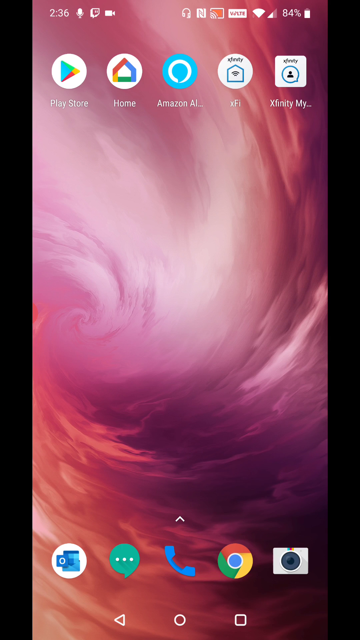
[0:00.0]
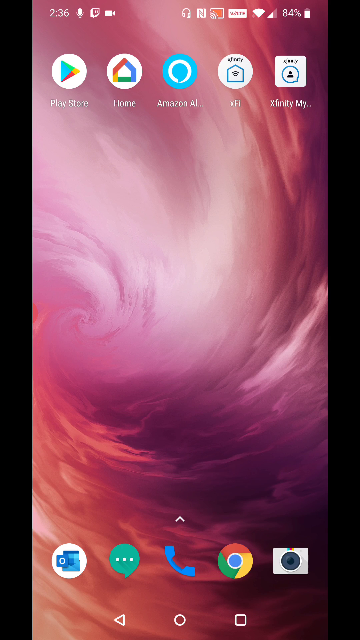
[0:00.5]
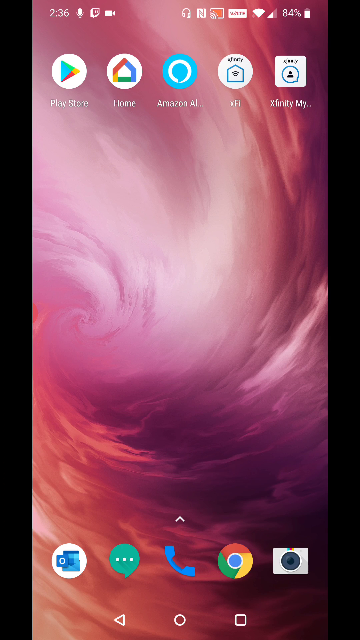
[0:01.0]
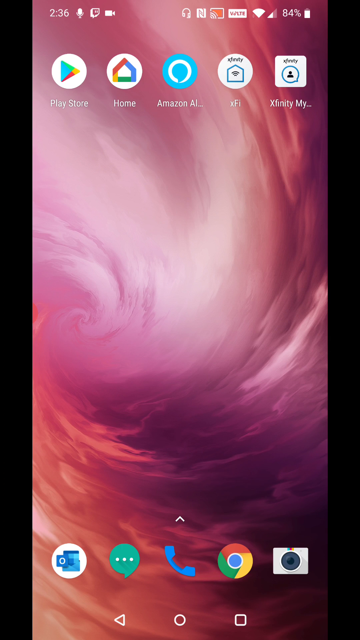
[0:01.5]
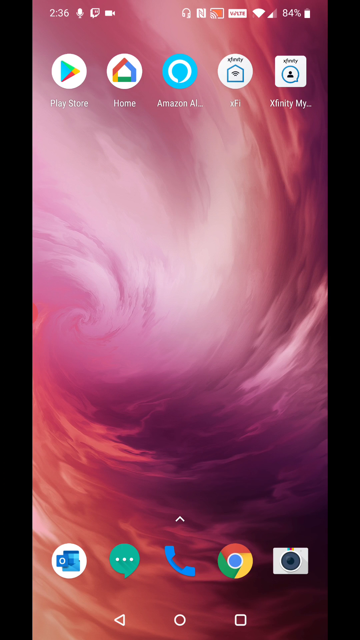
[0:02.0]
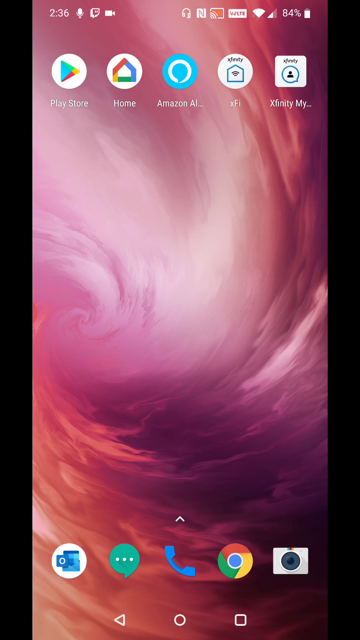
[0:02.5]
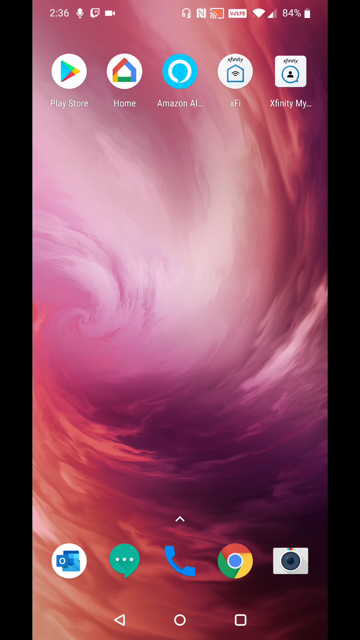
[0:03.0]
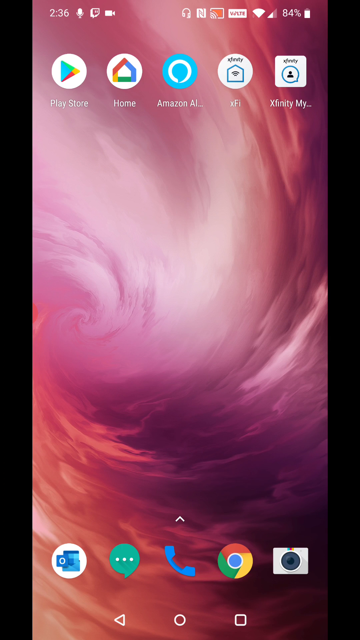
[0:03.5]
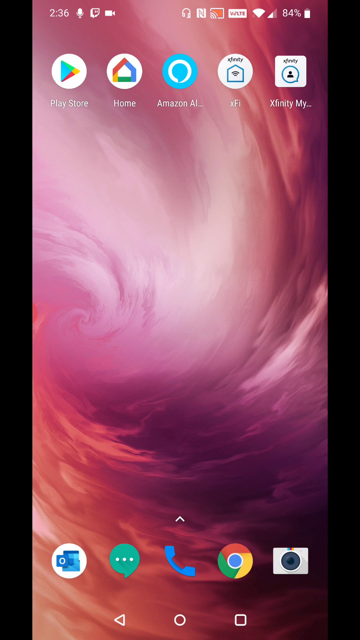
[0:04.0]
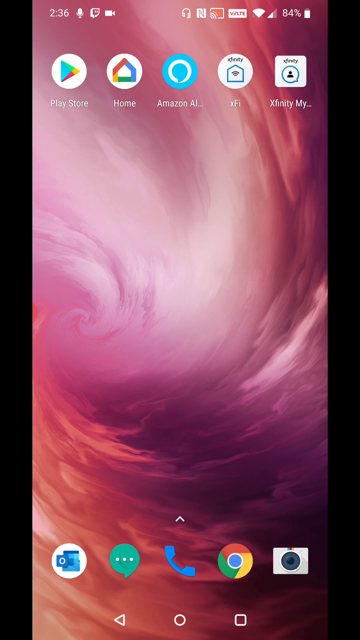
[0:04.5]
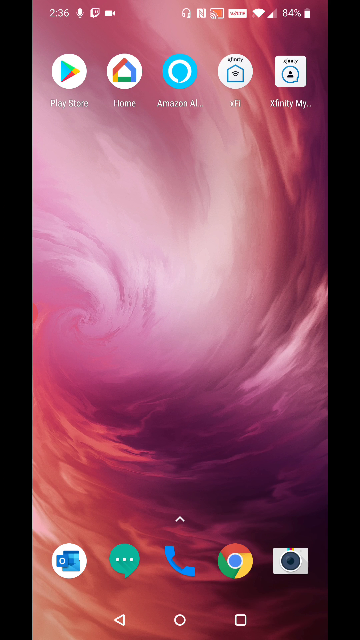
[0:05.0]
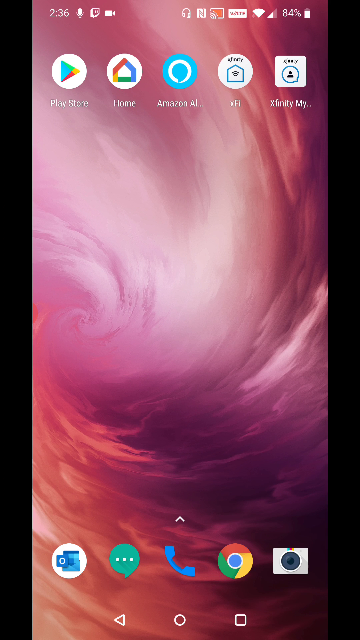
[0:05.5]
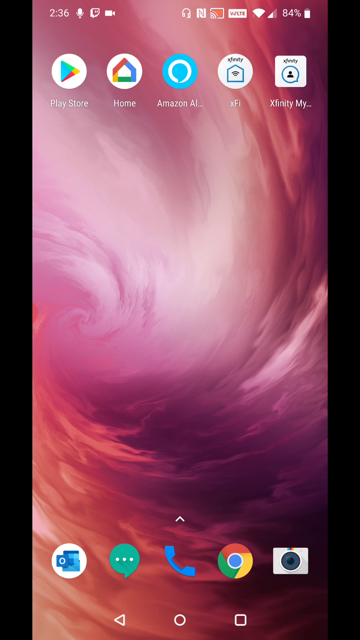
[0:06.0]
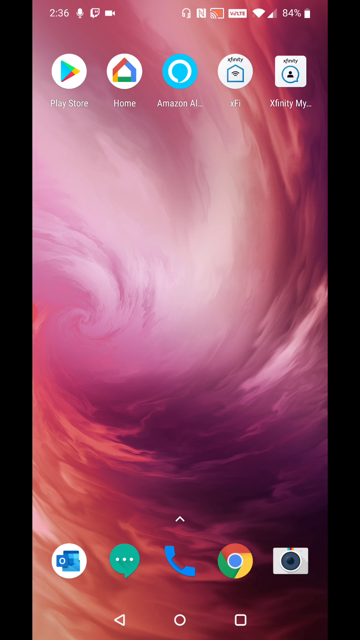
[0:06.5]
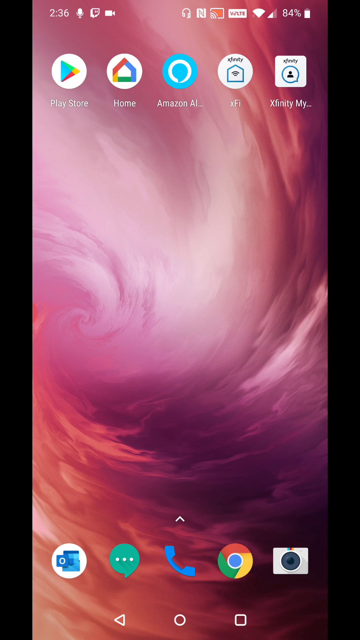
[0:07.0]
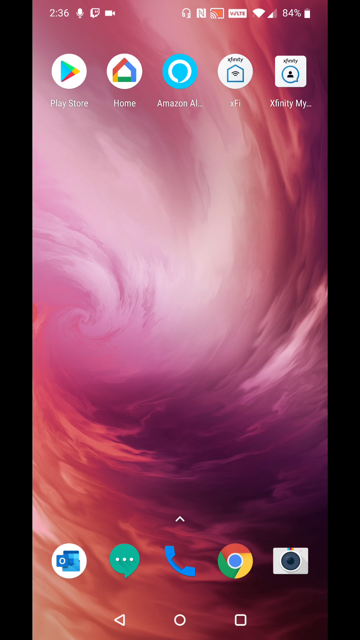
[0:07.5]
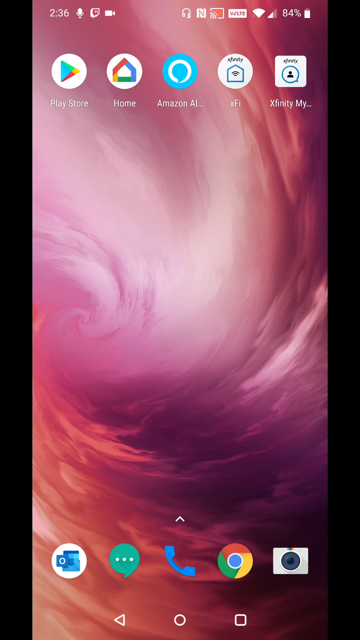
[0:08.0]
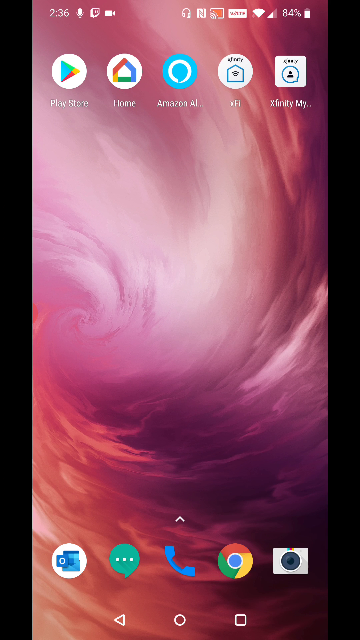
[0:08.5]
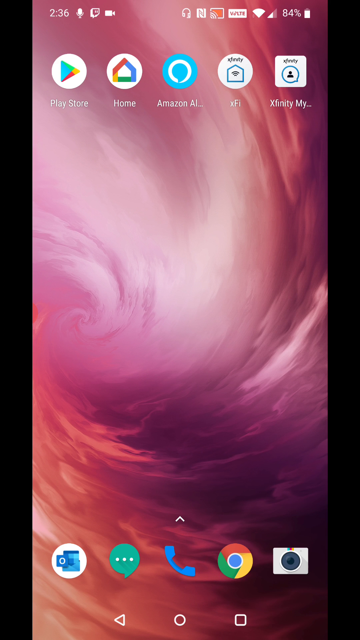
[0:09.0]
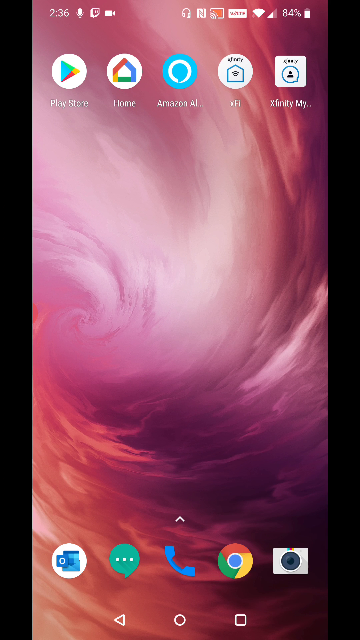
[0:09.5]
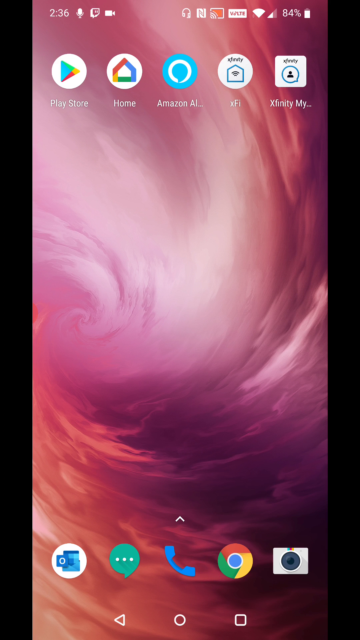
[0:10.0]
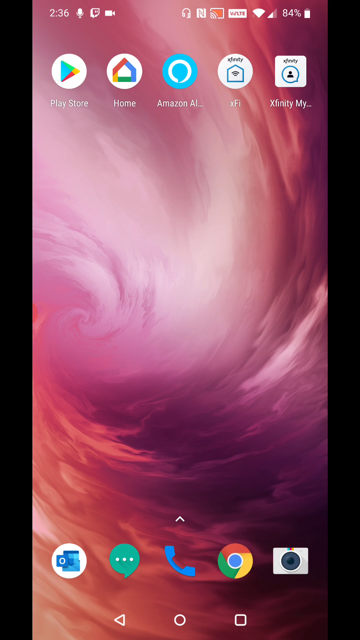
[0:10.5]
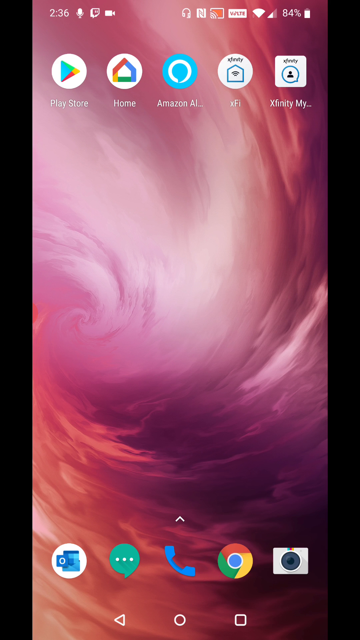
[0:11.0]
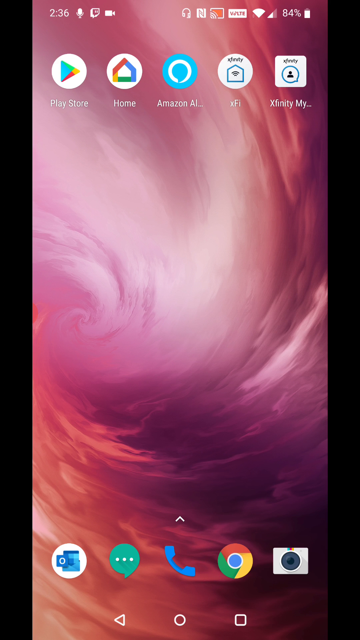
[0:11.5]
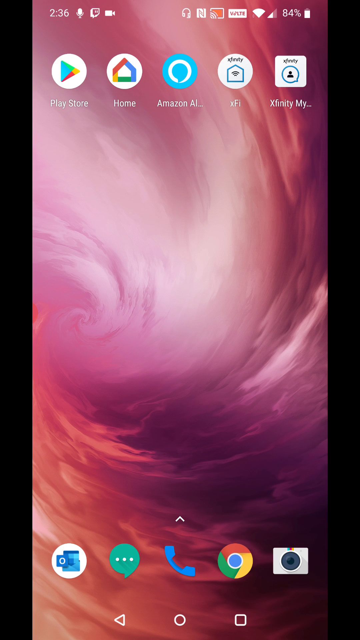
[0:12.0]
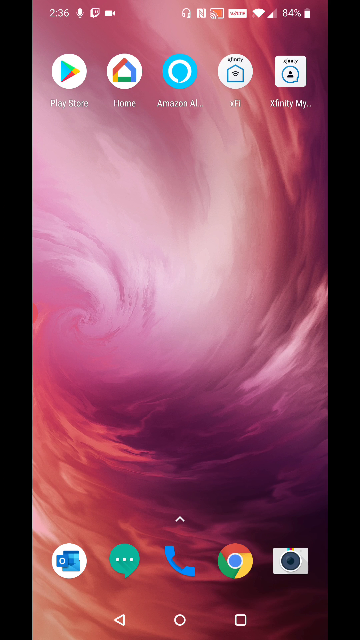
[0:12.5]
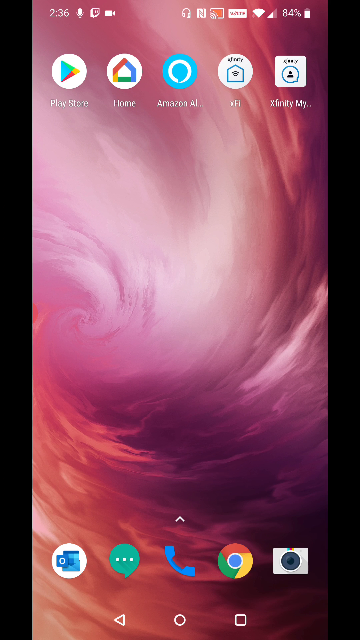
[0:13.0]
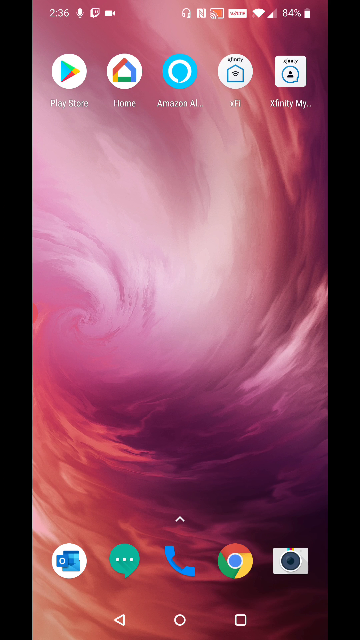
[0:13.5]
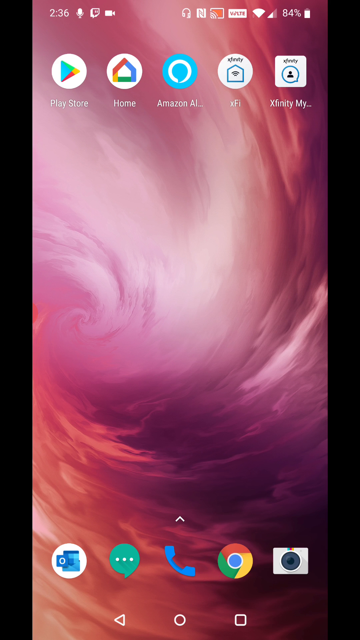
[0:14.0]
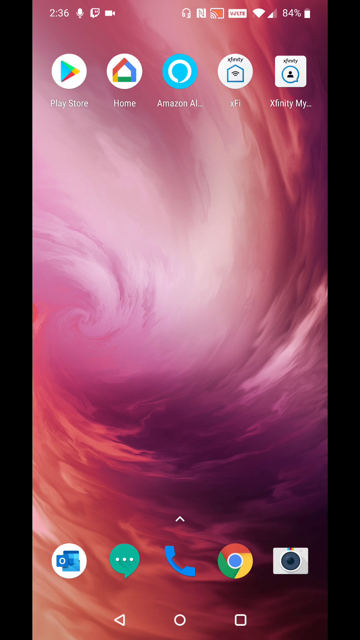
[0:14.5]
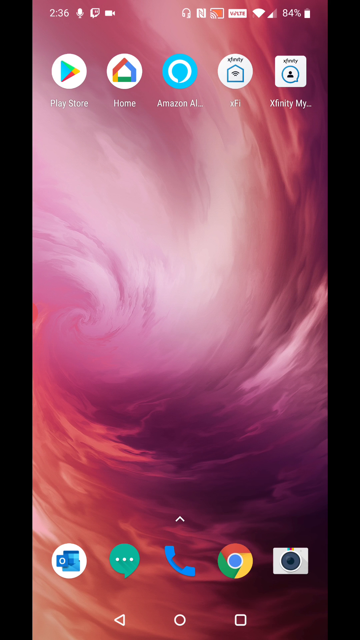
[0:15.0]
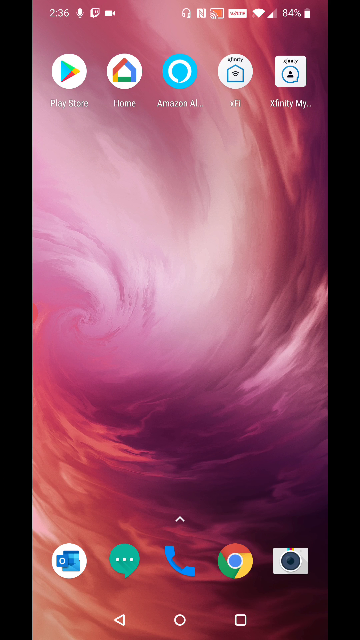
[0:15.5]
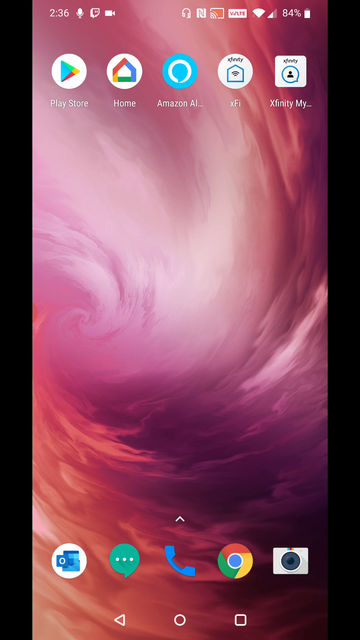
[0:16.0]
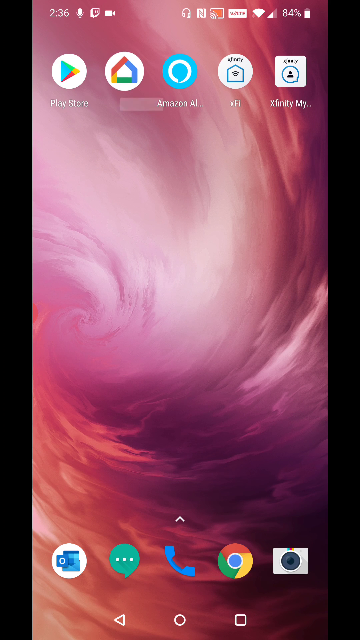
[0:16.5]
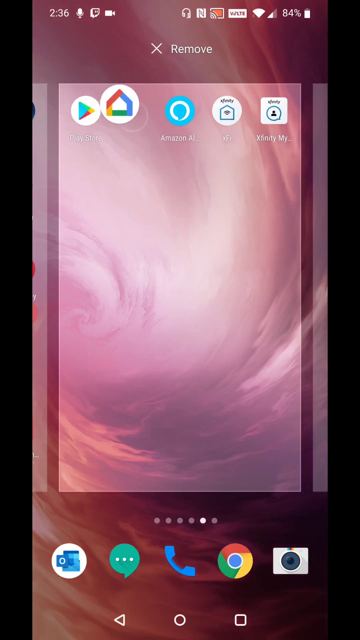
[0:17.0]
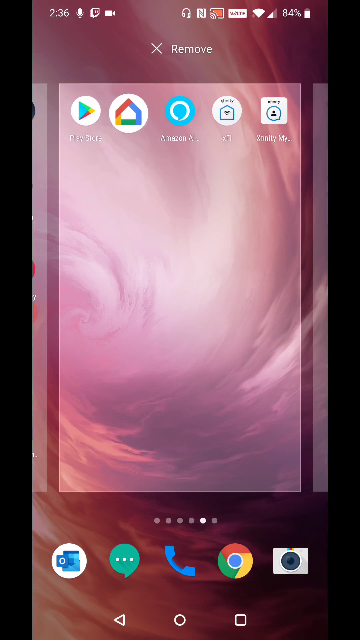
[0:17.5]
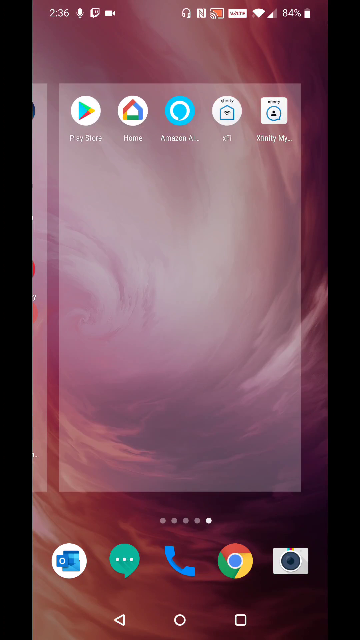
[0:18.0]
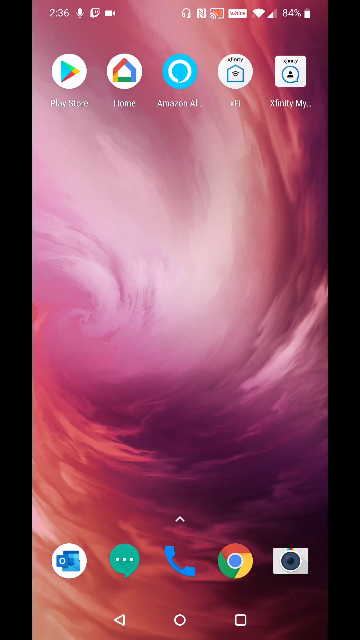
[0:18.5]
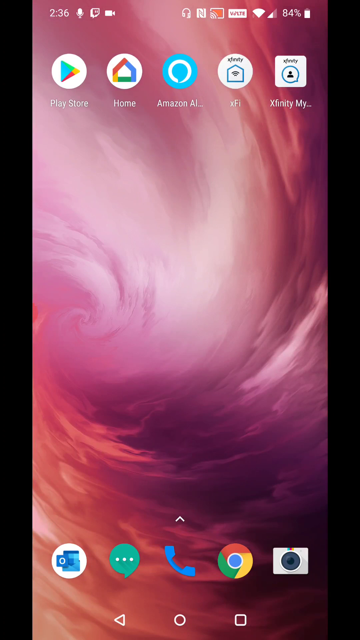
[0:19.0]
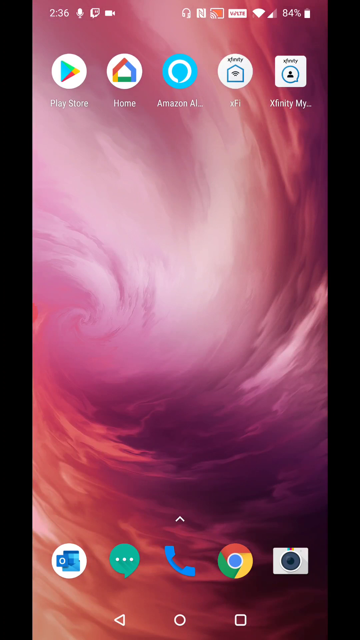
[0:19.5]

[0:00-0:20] Someone is on their cell phone. The screen shows the phone's background image, which looks like some type of cloud or storm in purple and red. App labels read "Play Store", "home", "Amazon" and something with Xfinity, along with a few other small icon apps. The person is not doing anything on the phone yet; only the background is shown. Then some text appears that says something about "remove", apparently as they are about to do something. The battery is at 84 percent and the phone displays 2:36.